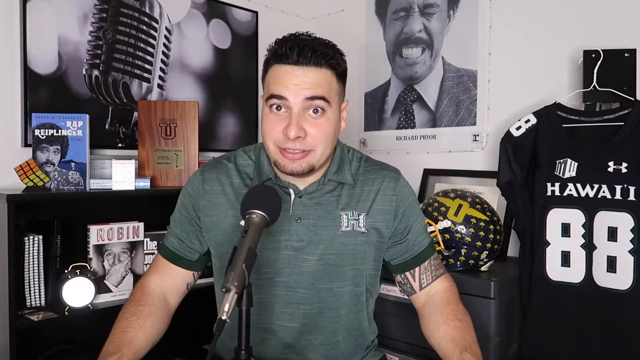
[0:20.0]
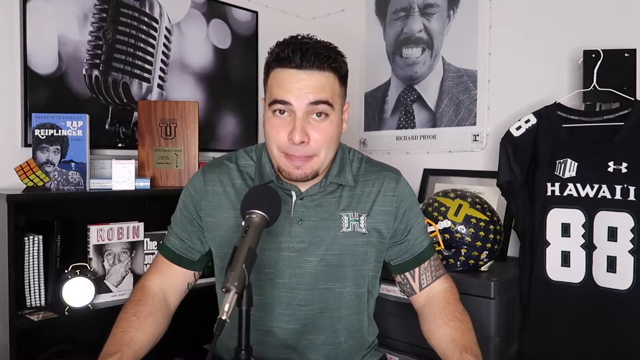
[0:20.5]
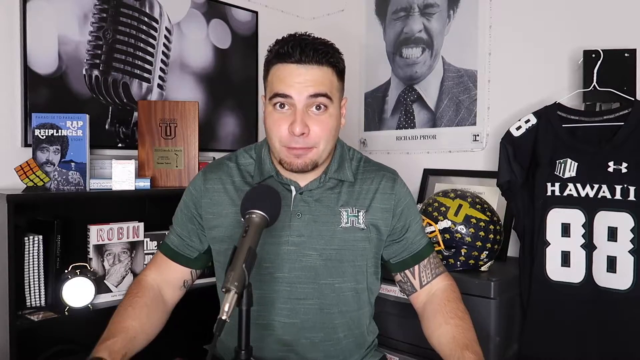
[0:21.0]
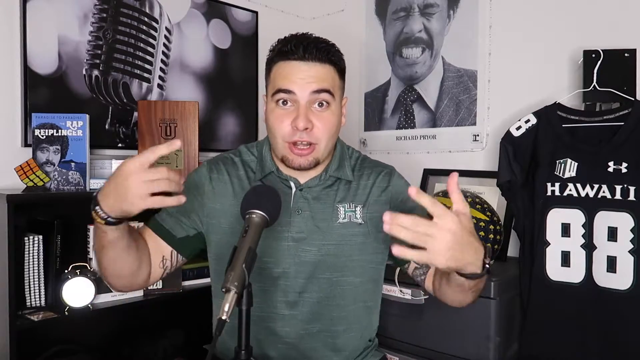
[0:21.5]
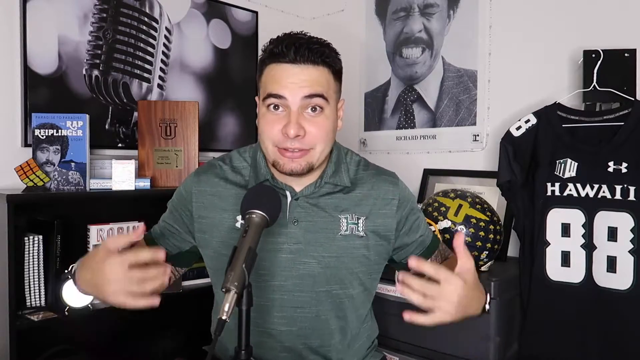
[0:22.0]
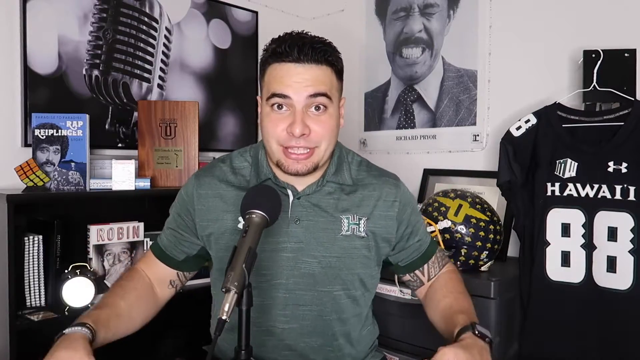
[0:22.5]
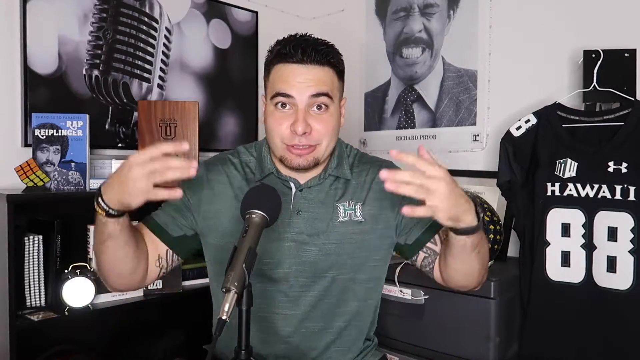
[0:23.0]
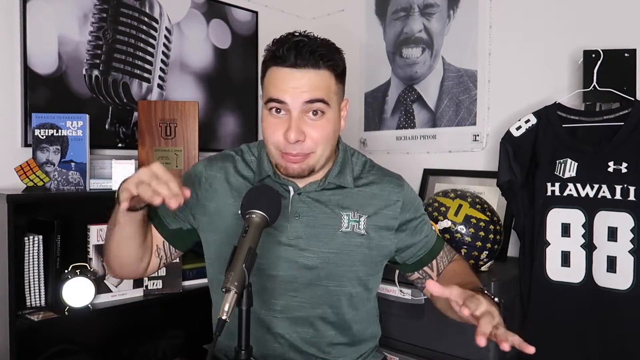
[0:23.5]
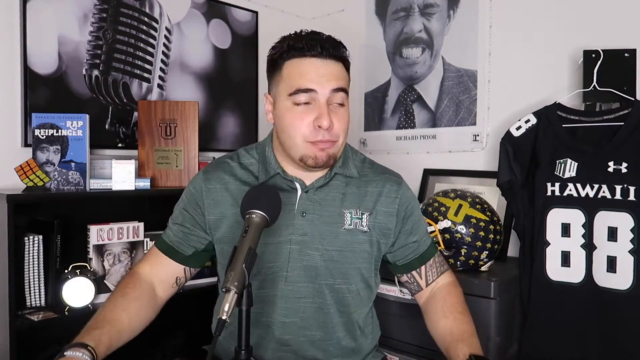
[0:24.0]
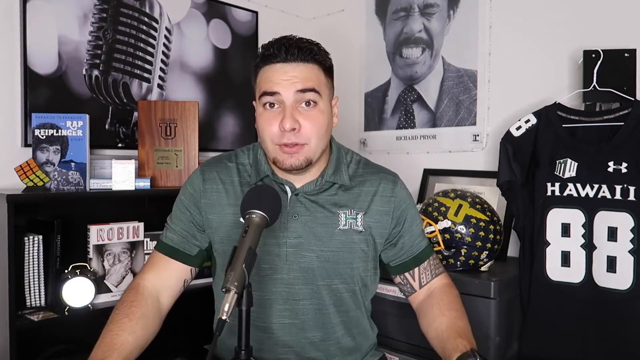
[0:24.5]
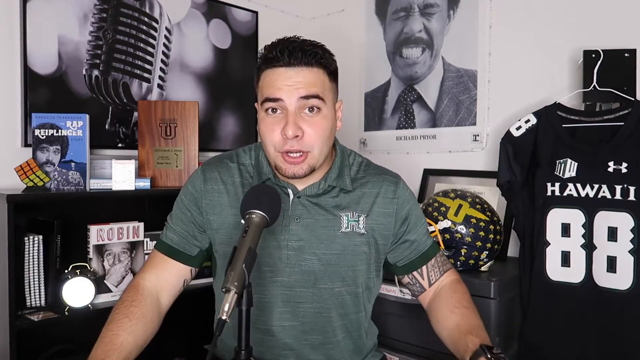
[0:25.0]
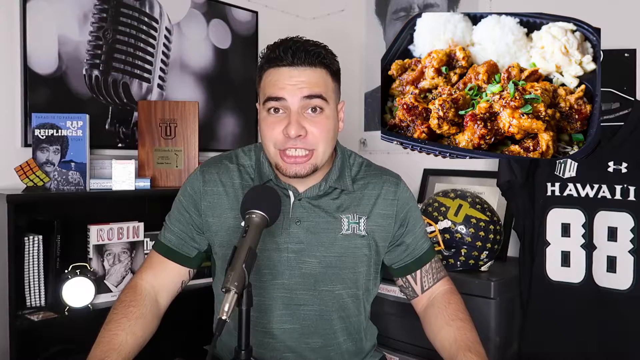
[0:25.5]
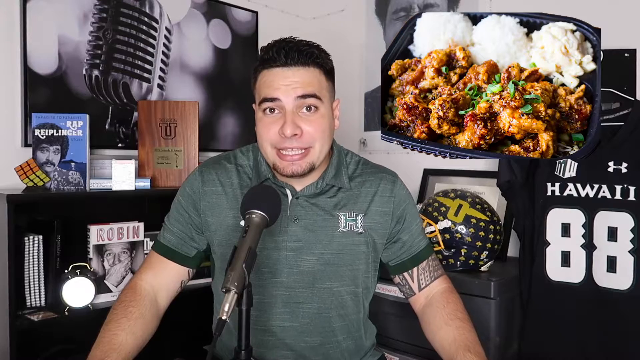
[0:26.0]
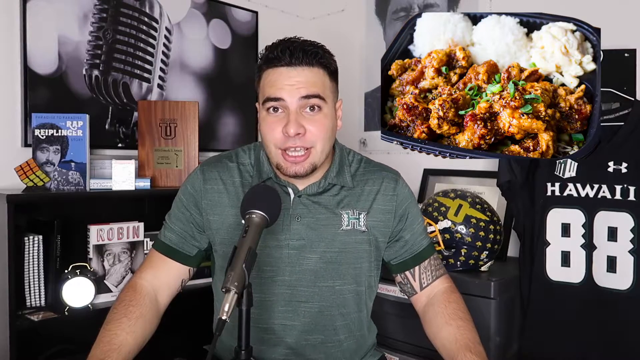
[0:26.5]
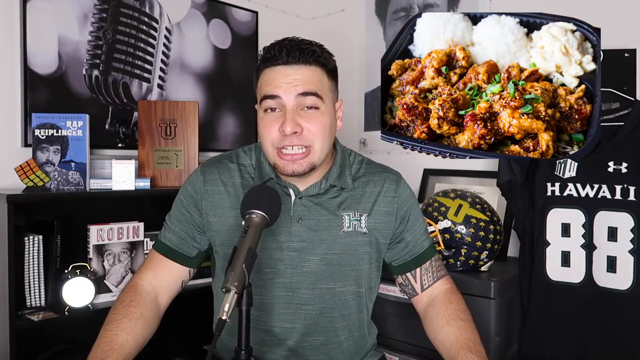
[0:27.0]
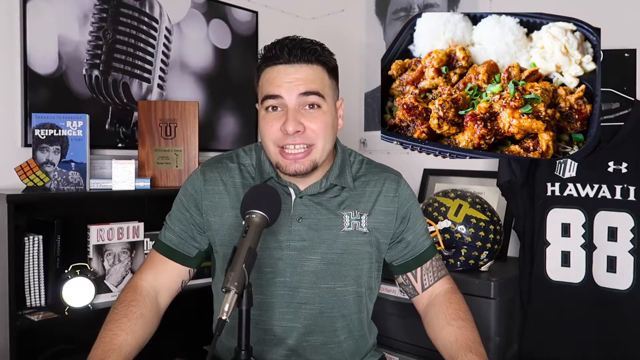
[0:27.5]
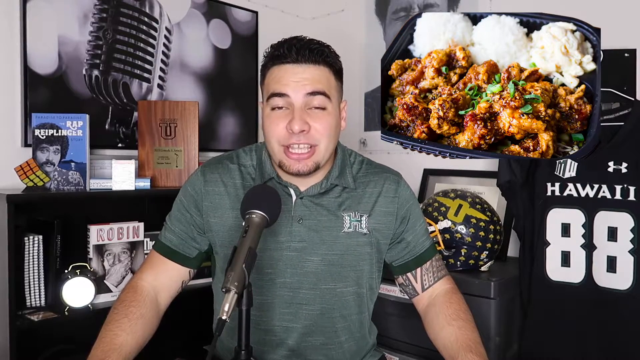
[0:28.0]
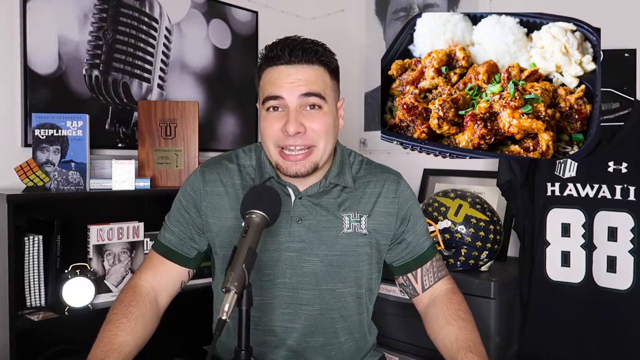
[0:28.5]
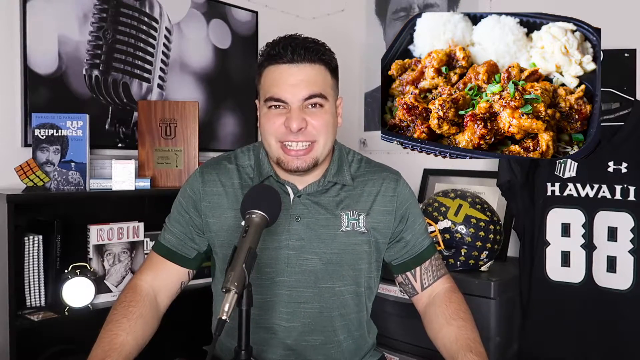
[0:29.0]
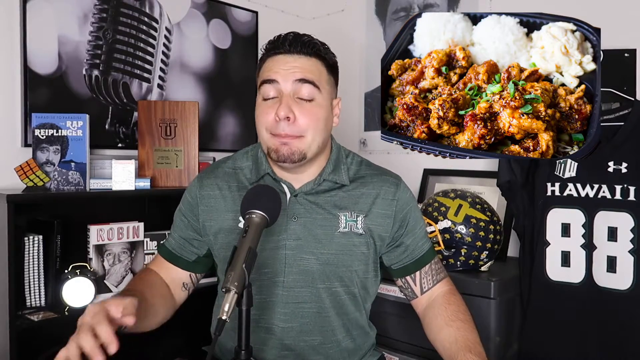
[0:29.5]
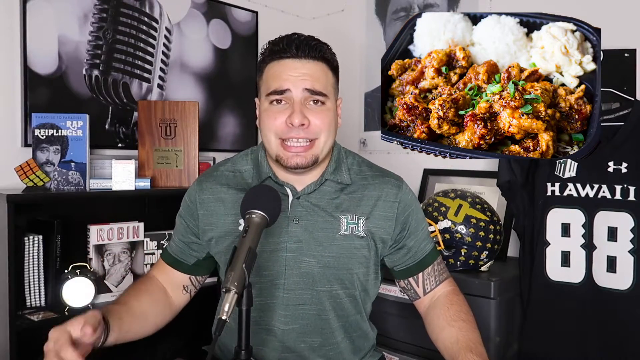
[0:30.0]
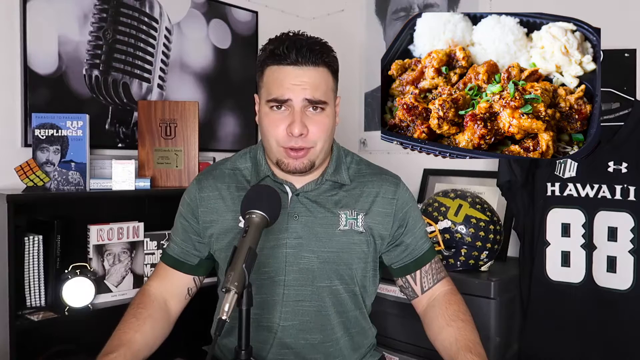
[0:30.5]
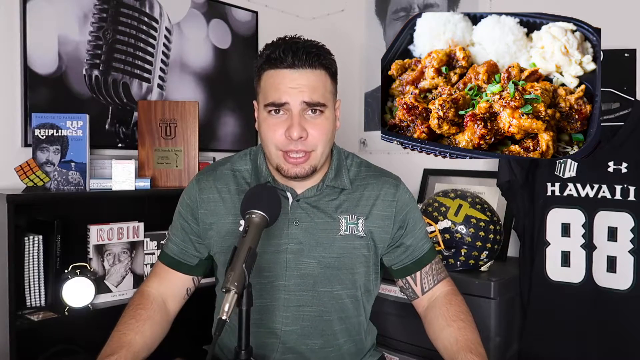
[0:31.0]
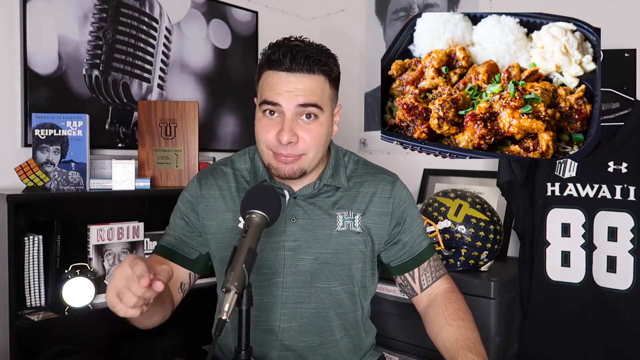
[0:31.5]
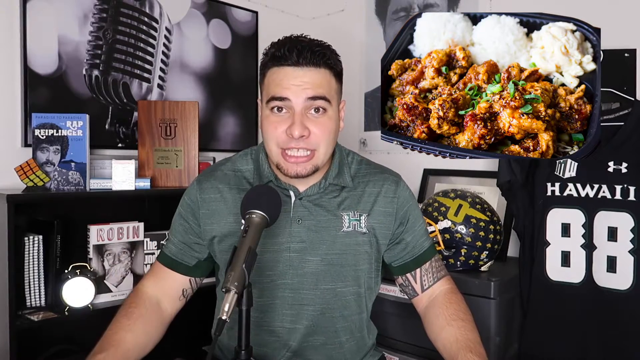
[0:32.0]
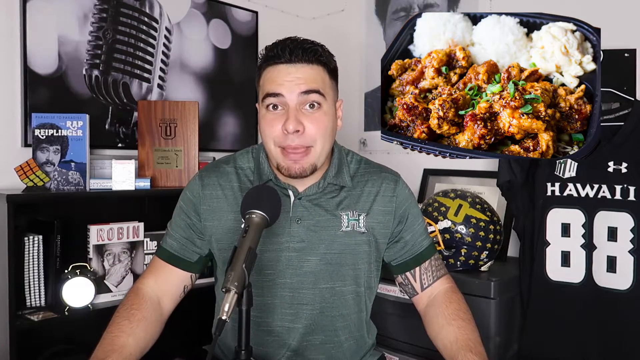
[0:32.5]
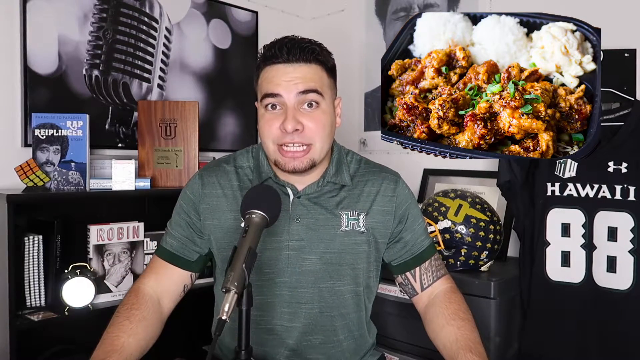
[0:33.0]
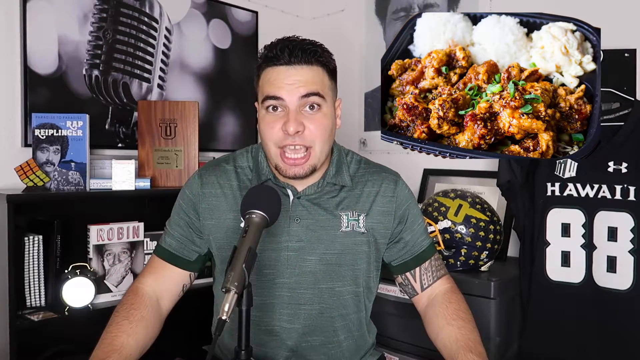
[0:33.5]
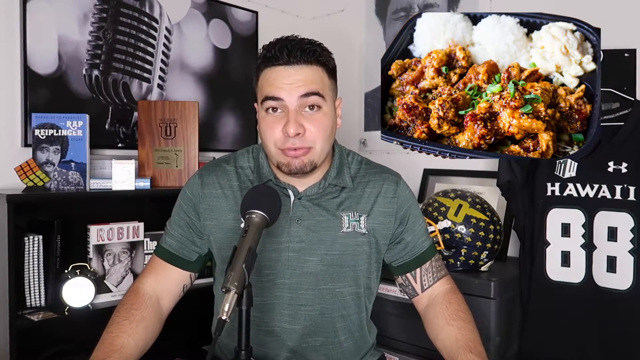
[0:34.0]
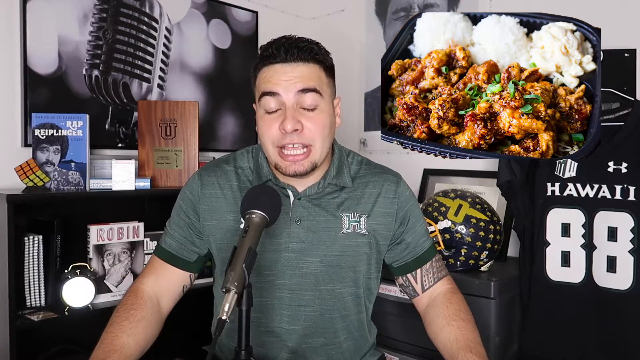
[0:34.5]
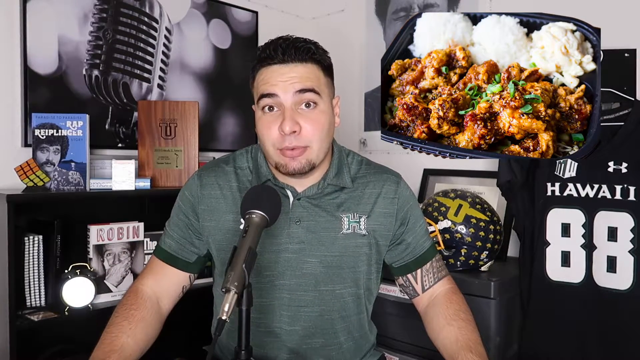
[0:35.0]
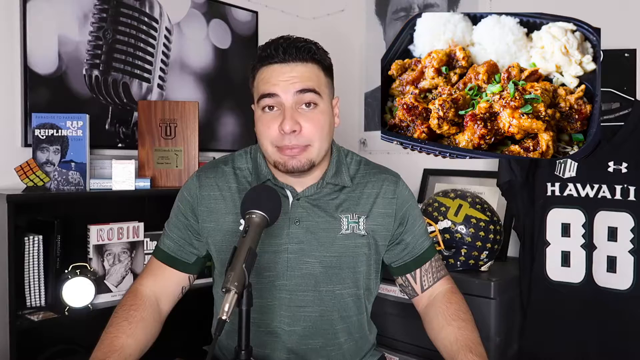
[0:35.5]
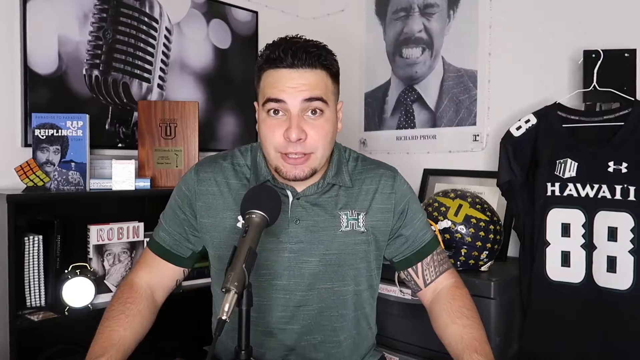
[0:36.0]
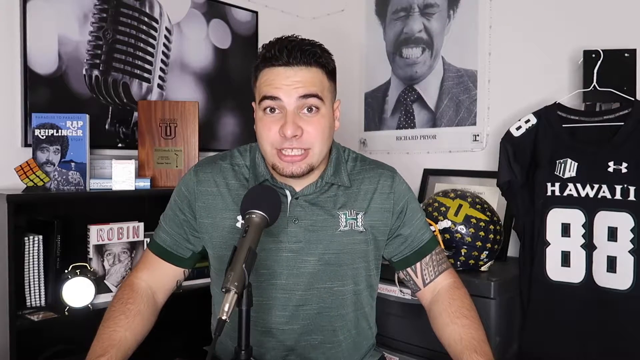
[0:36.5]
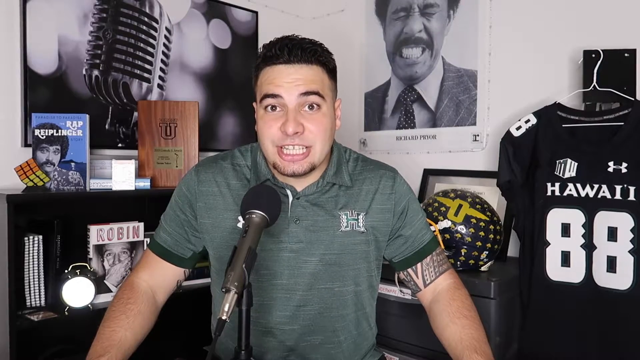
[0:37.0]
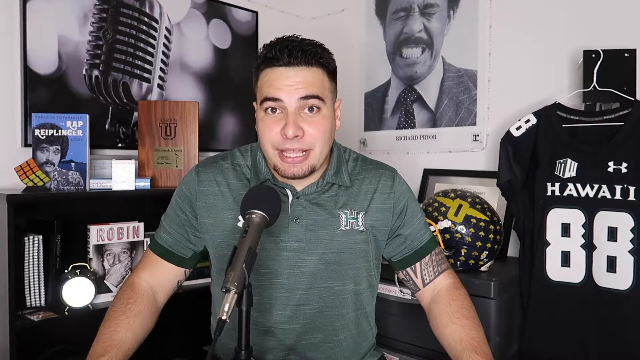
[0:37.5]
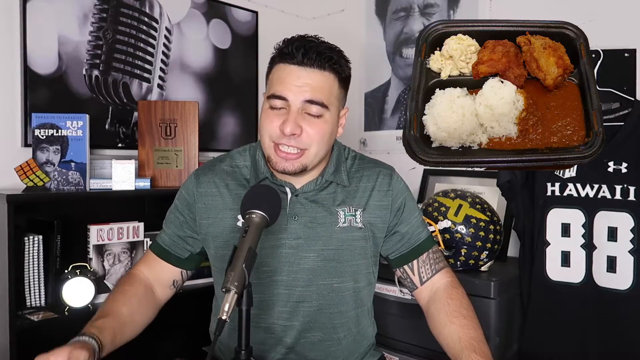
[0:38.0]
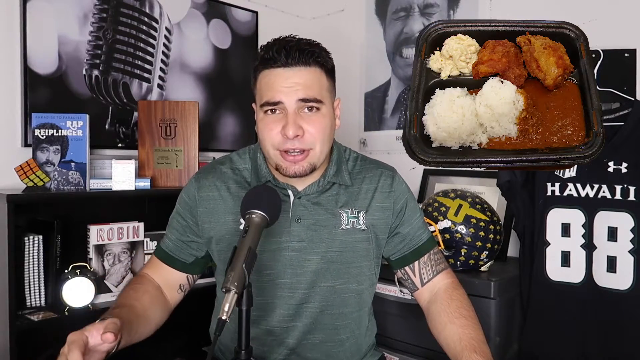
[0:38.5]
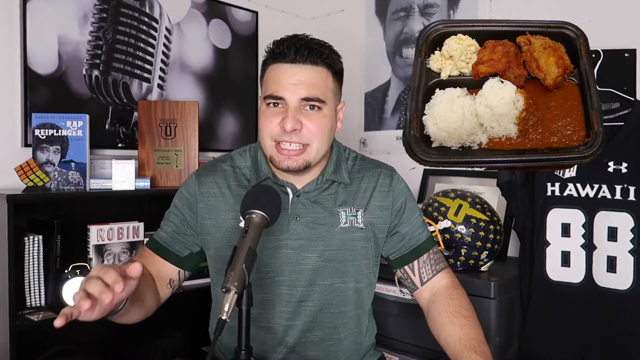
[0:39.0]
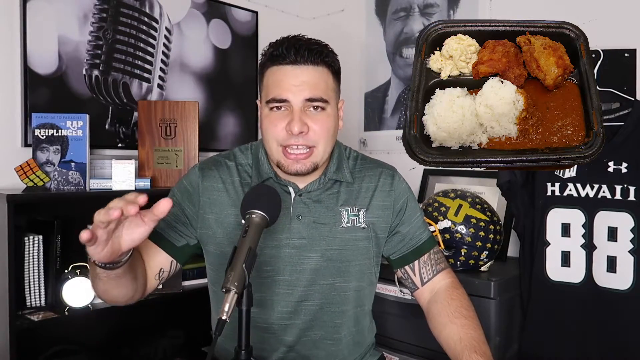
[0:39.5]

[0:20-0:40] The man has a small smattering of hair on his chin, short black hair gelled upwards, and a tattoo on one of his upper arms, and wears a green shirt with the letter H on it. He looks directly at the viewer, sitting in front of a microphone inside a room. At the top right of the room is an image of a man gritting and baring his teeth, on the right is a sports jersey for Hawaii 88, and on the left a series of decorative books and objects is on a black shelf. The man nods and raises both arms upwards, circling them as if to demonstrate a point, then points at the viewer. An image of an Indian-looking curry appears superimposed at the top right of the screen: two scoops of rice, a scoop of mashed potato, and a section of what appears to be lamb or possibly beef curry inside a black plastic box. After a while this curry disappears and a different meal in the same style of black plastic box is shown, with a scoop of mashed potato, two scoops of rice, two big pieces of meat that appear to be some sort of wing or possibly chicken nugget, and a brown gravy in the bottom section of the tray.